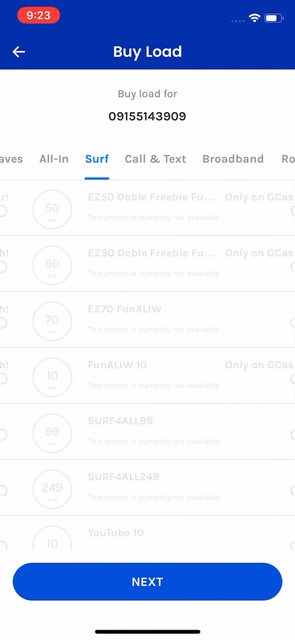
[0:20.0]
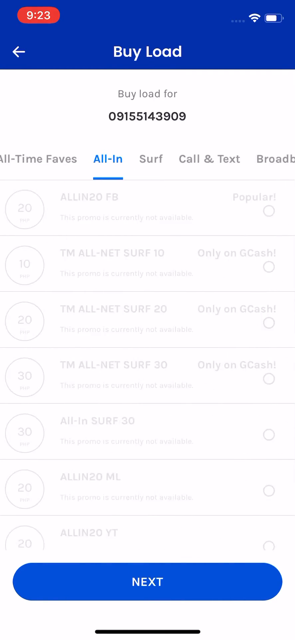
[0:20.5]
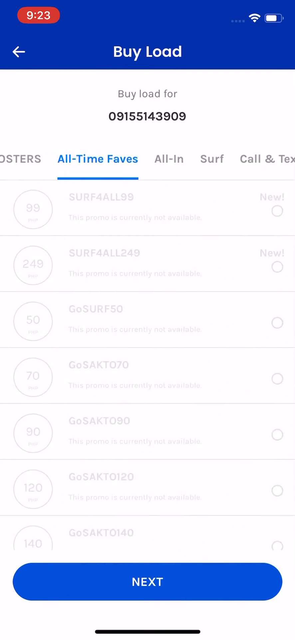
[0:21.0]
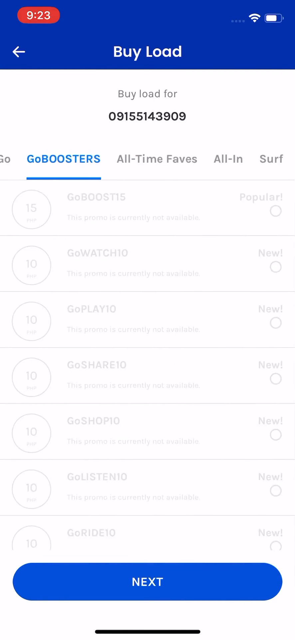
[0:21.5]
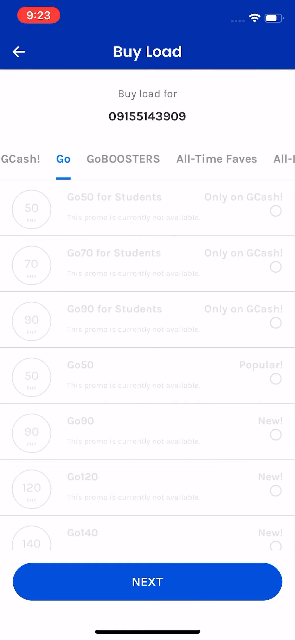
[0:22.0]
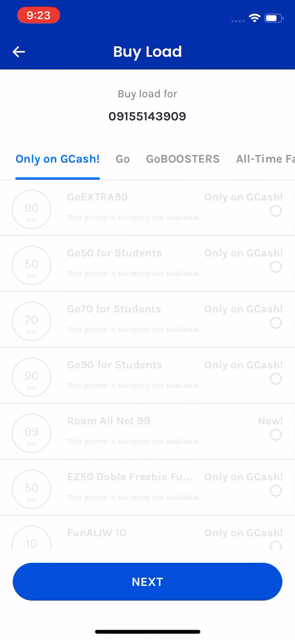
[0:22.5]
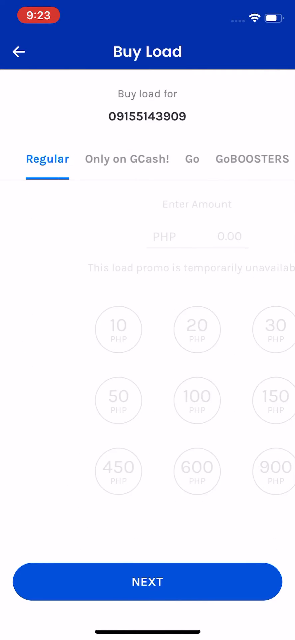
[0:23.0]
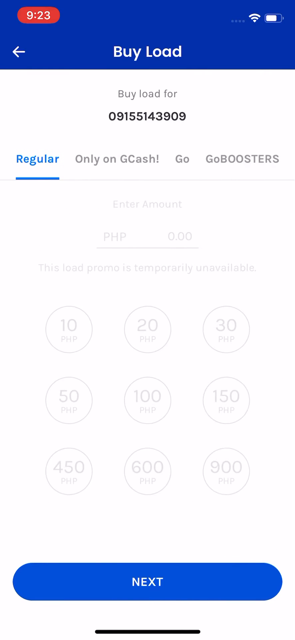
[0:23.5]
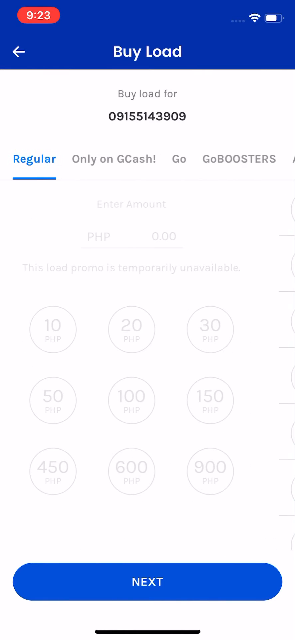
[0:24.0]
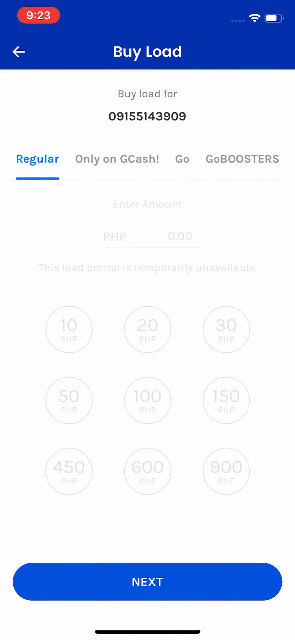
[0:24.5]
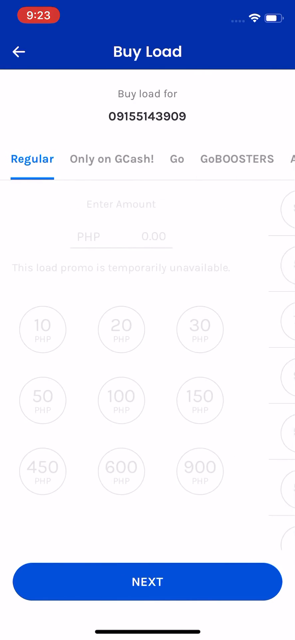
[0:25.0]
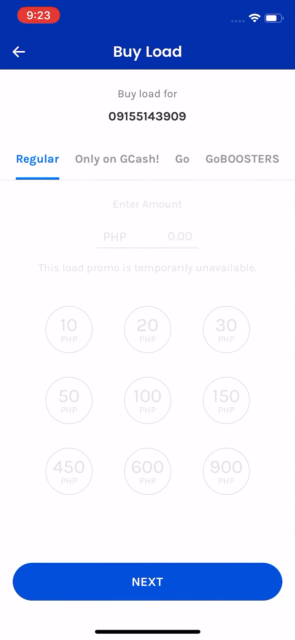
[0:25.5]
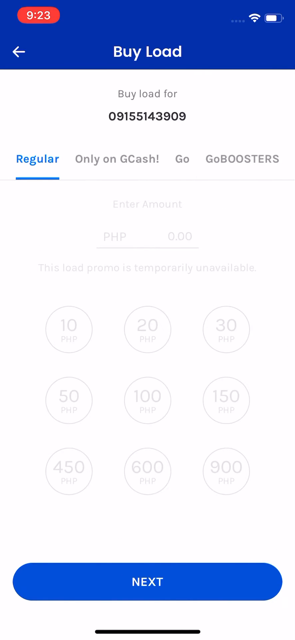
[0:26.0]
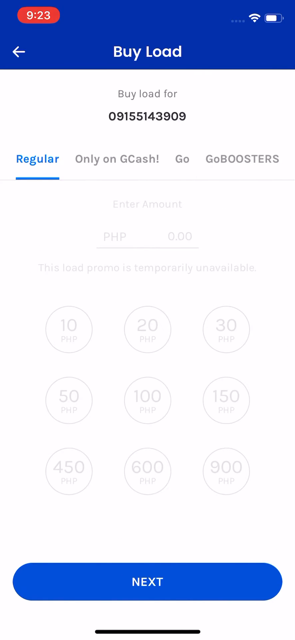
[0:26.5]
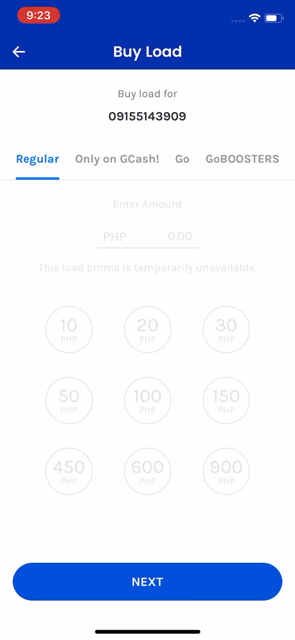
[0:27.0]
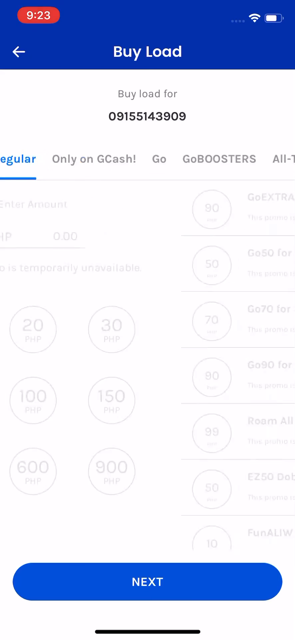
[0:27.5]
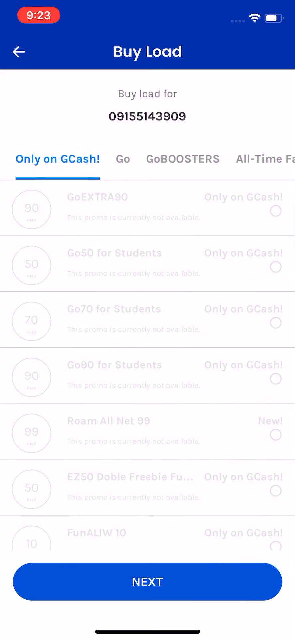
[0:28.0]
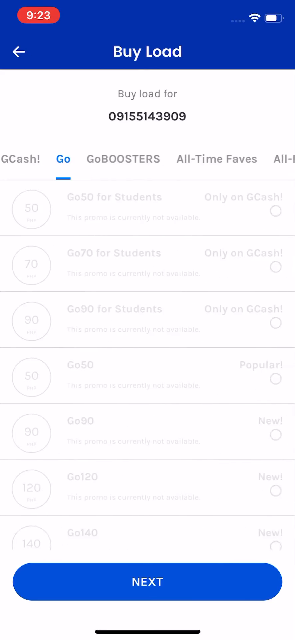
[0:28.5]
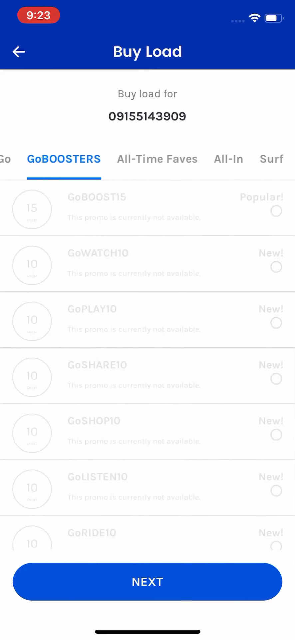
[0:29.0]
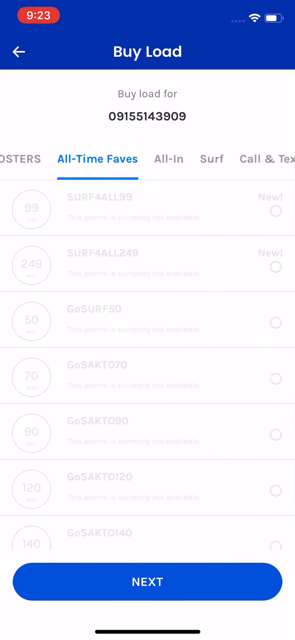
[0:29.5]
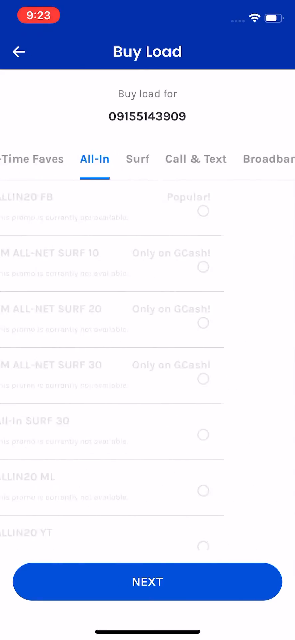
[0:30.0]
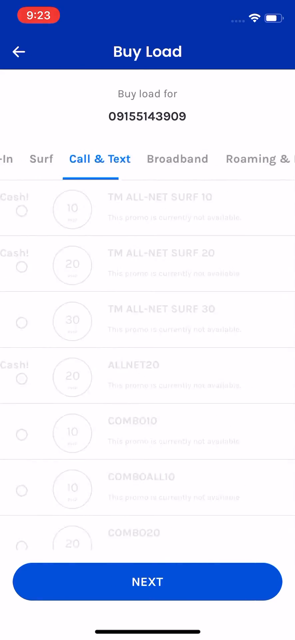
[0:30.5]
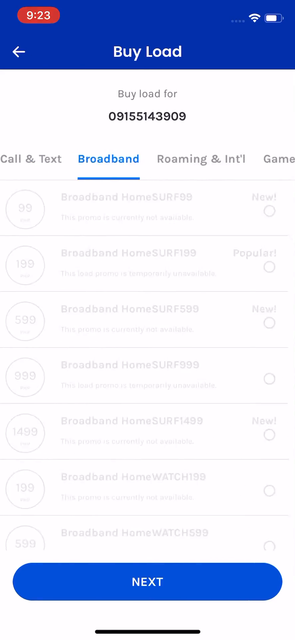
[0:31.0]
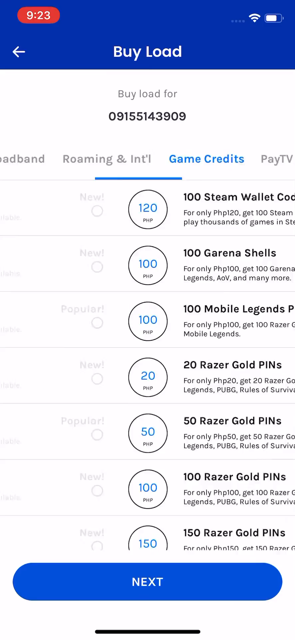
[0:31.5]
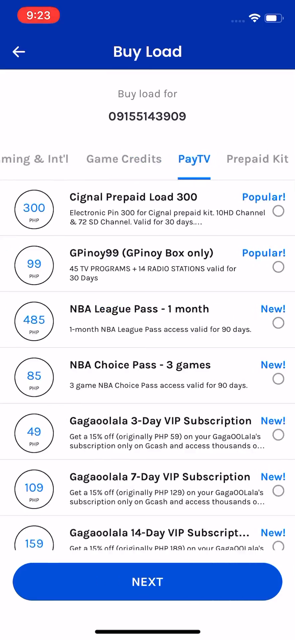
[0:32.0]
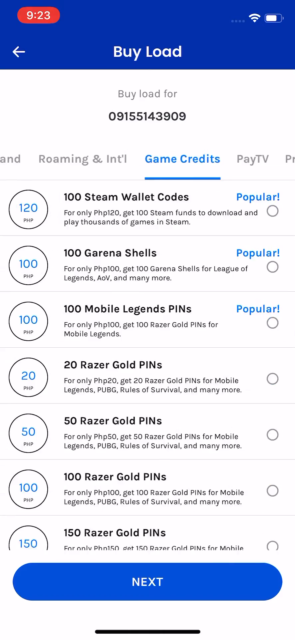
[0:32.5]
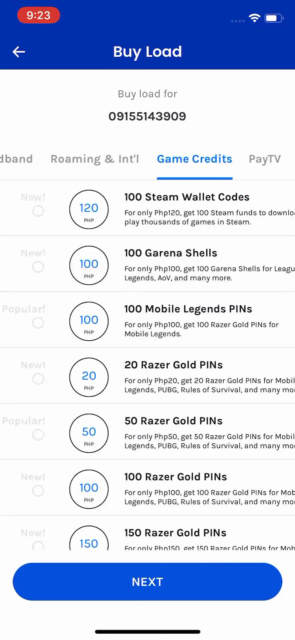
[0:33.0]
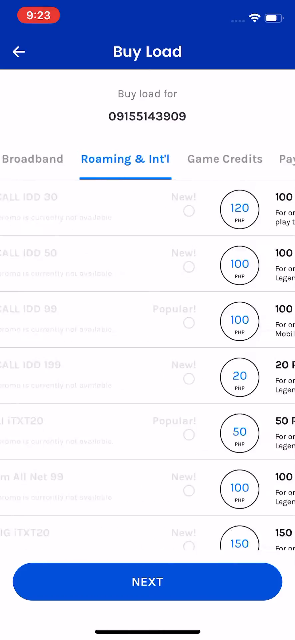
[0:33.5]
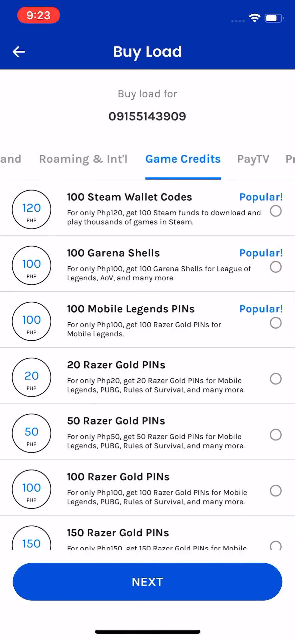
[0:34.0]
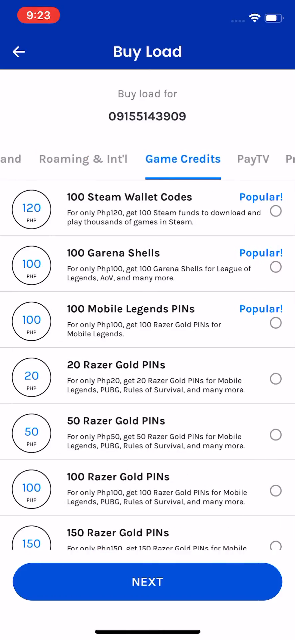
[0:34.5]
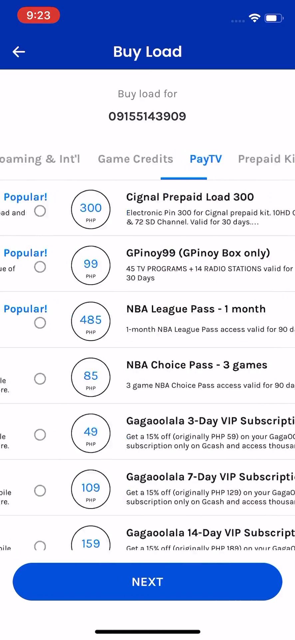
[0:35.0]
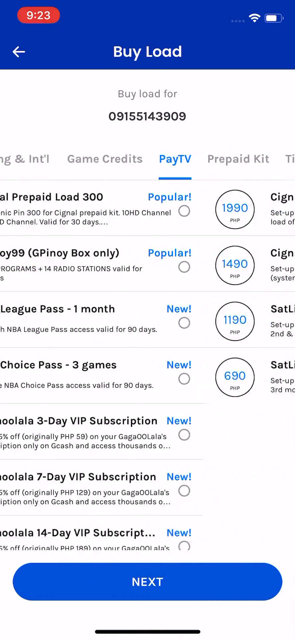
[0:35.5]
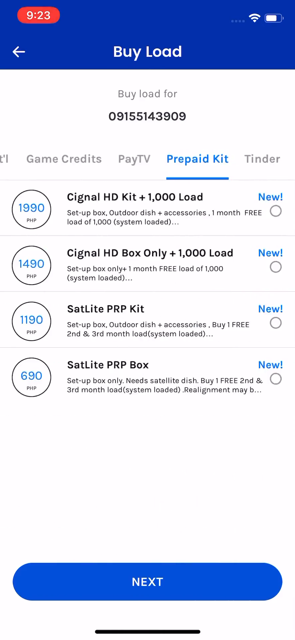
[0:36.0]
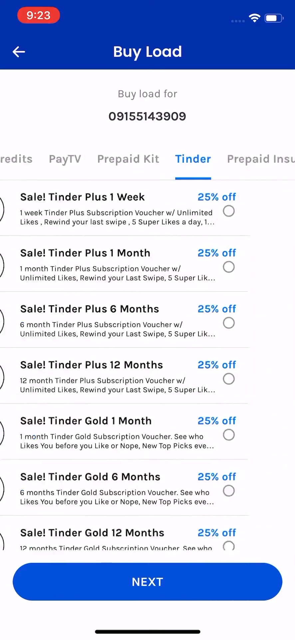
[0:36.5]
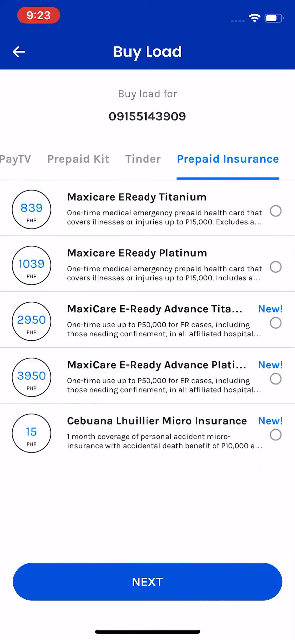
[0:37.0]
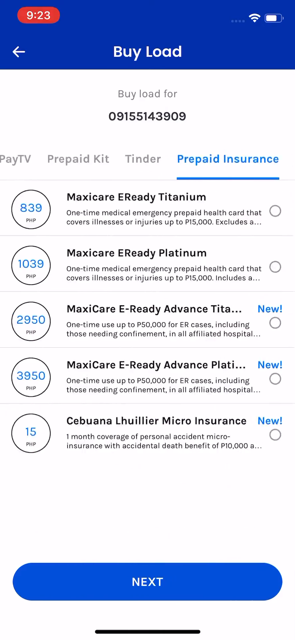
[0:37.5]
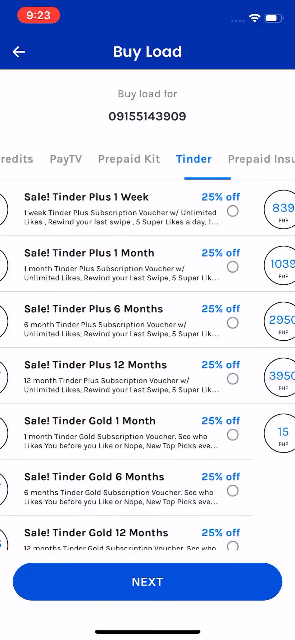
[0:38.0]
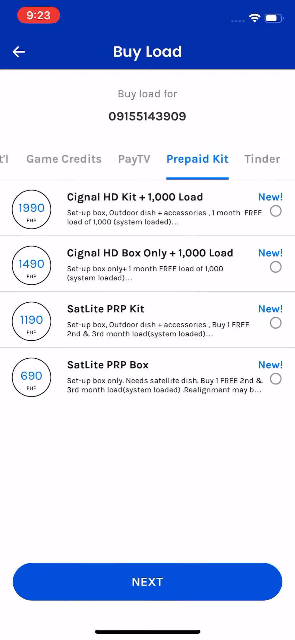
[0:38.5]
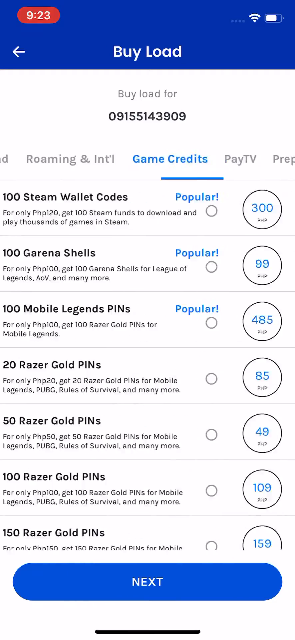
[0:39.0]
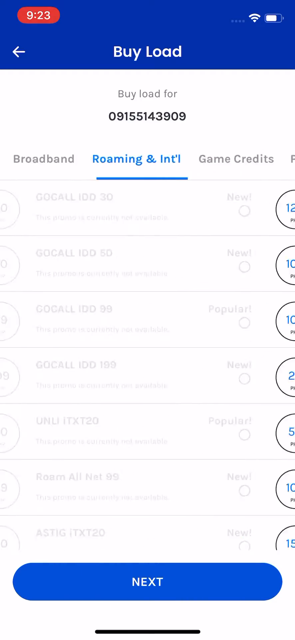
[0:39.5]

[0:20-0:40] The person scrolls through the buy load options, going back to regular at the very left by swiping. Below, the items under each tab are shown, but they are mostly grayed out and cannot be tapped. Under game credits the items are not grayed out, with options such as 100 Steam Wallet codes or 100 Garena shells; pay TV and prepaid insurance are also available, while surf, call and text are grayed out. The person scrolls to the very left and then tries to scroll to the very right again. The options that are not grayed out are game credits, pay TV, prepaid kit, Tinder and prepaid insurance. Under each listing there are at least around four different items to buy, with the price shown on the left side; one of them is $1,990, in a blue bubbly font with a black circle around it.